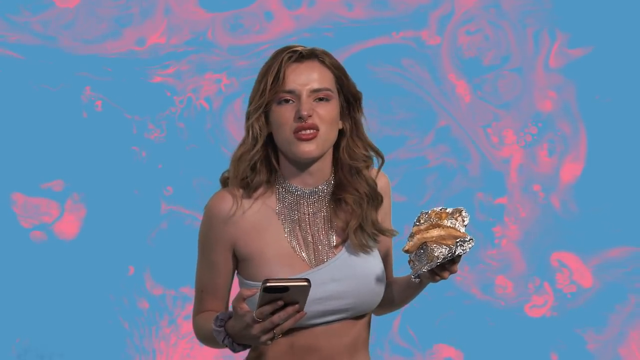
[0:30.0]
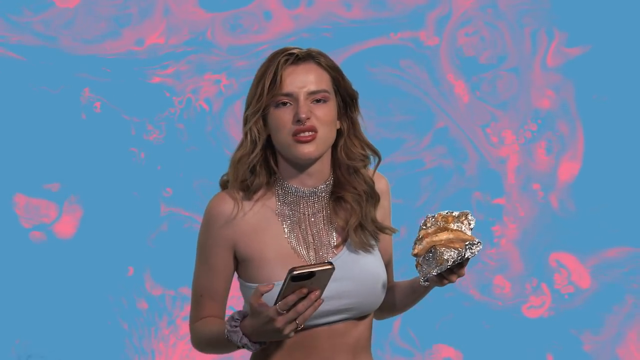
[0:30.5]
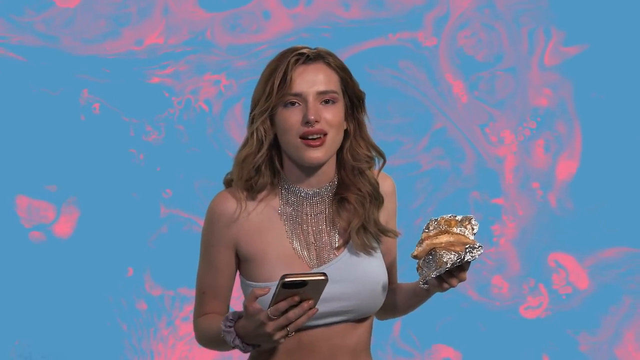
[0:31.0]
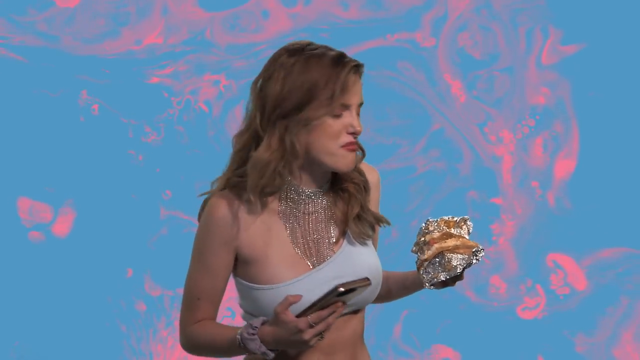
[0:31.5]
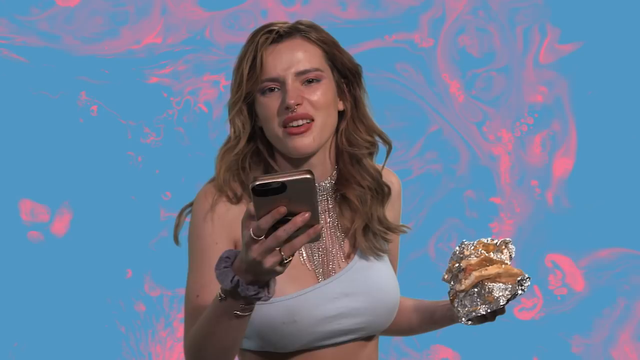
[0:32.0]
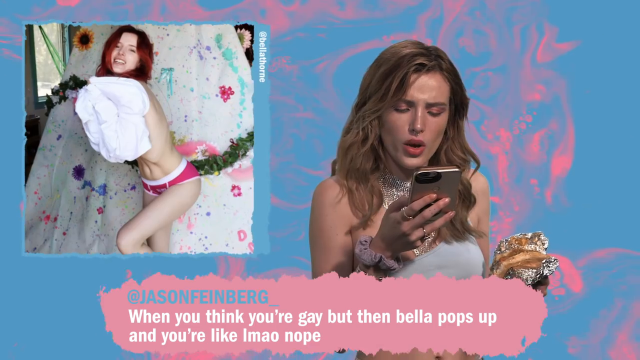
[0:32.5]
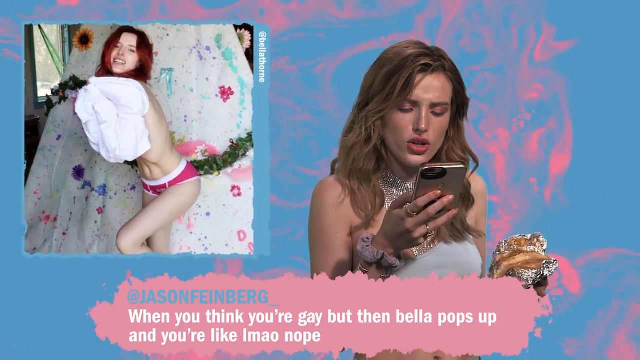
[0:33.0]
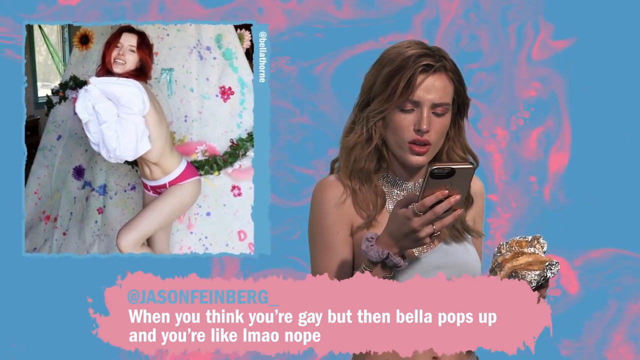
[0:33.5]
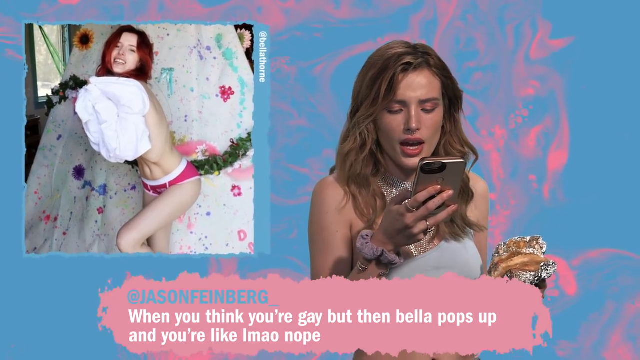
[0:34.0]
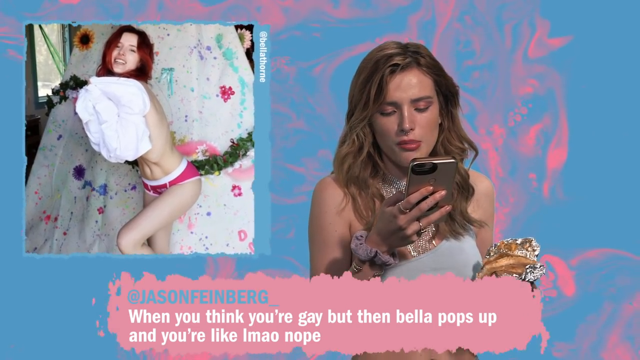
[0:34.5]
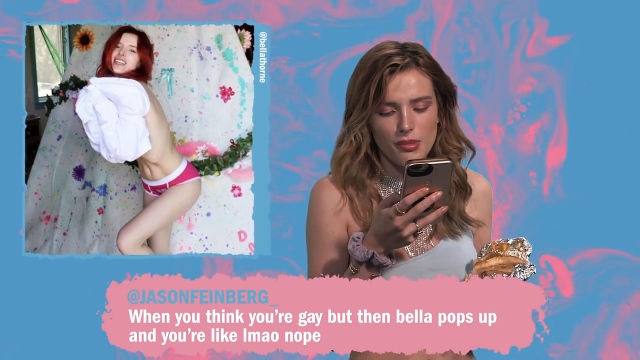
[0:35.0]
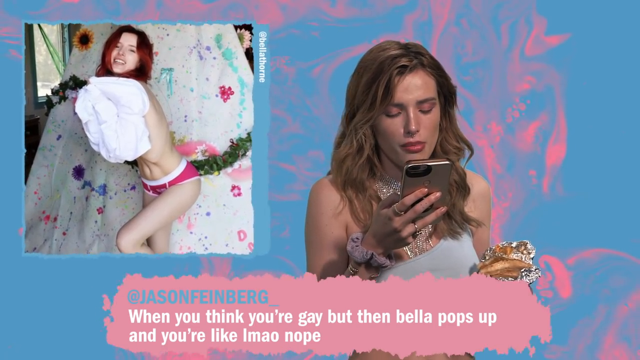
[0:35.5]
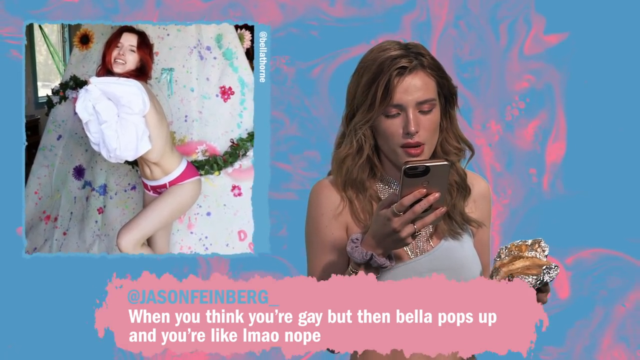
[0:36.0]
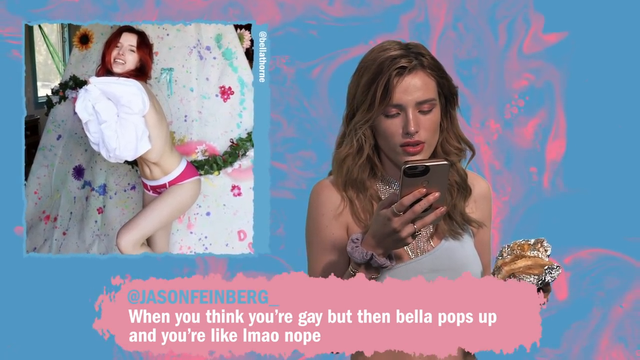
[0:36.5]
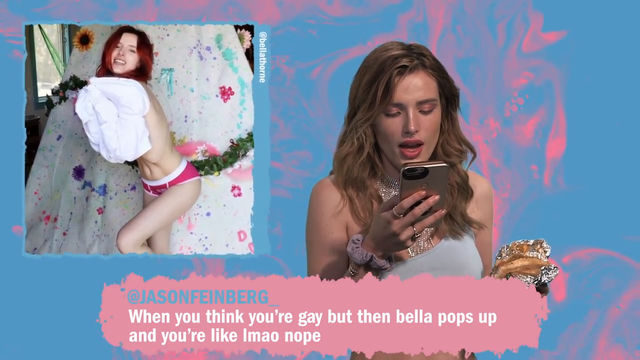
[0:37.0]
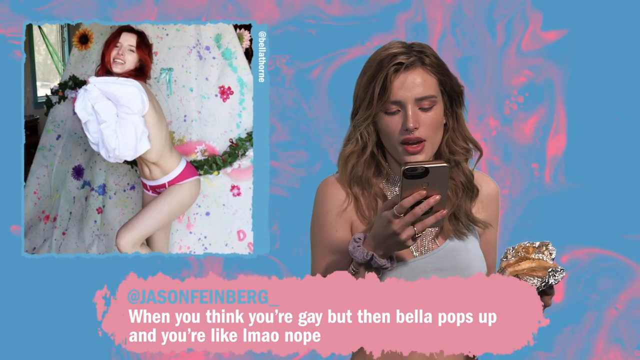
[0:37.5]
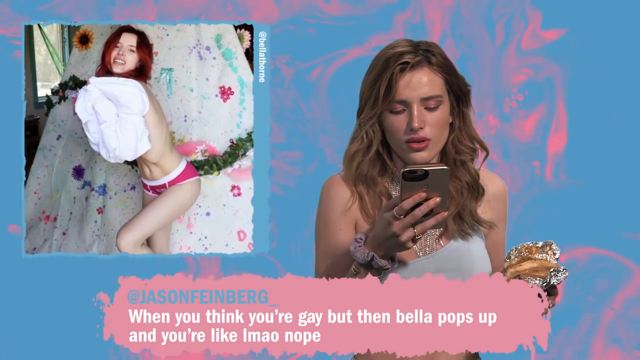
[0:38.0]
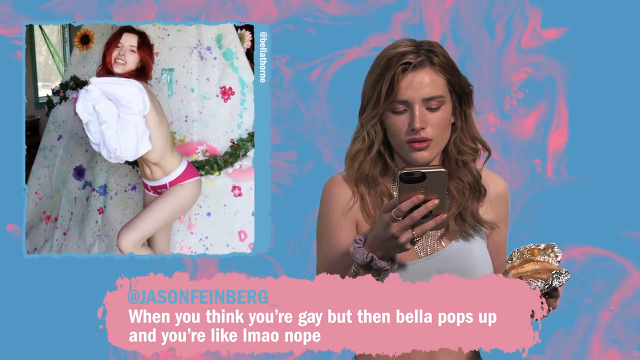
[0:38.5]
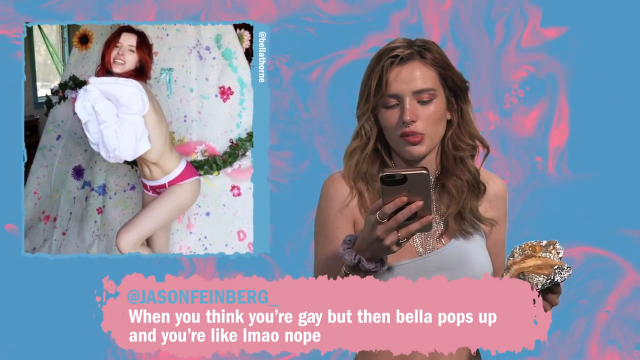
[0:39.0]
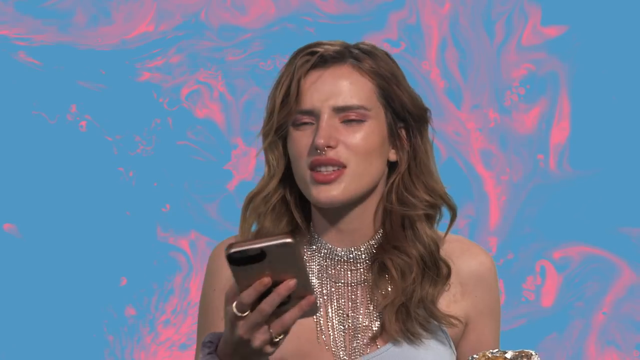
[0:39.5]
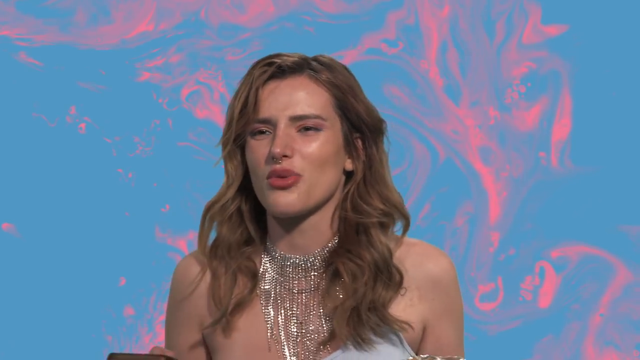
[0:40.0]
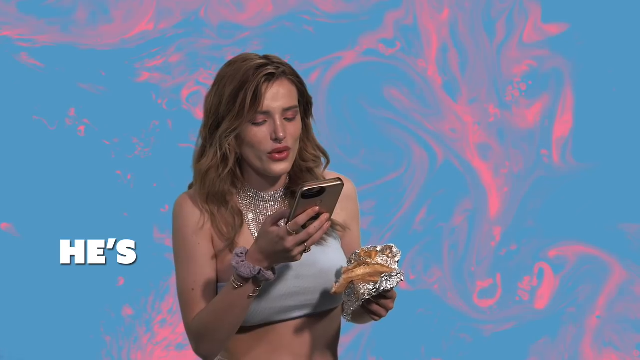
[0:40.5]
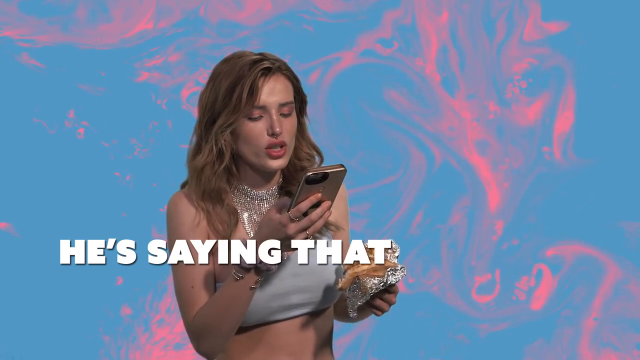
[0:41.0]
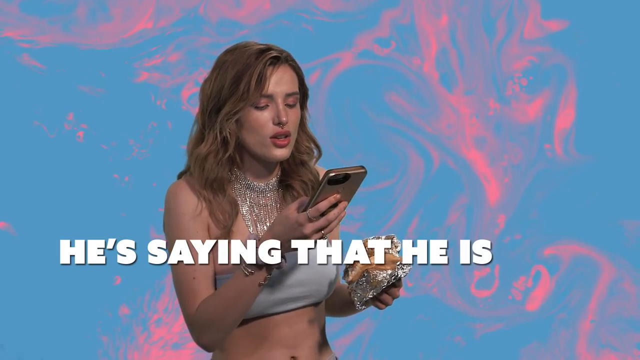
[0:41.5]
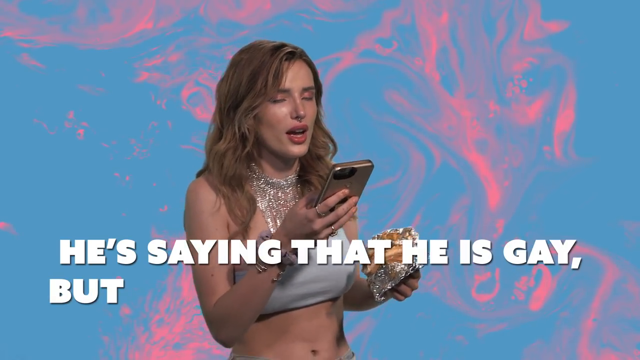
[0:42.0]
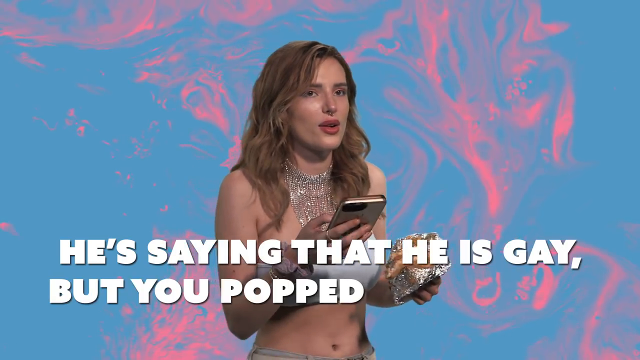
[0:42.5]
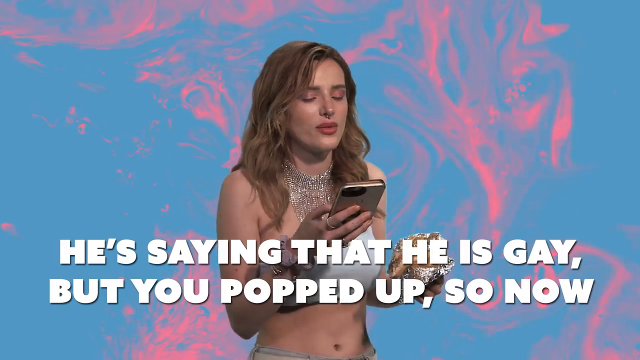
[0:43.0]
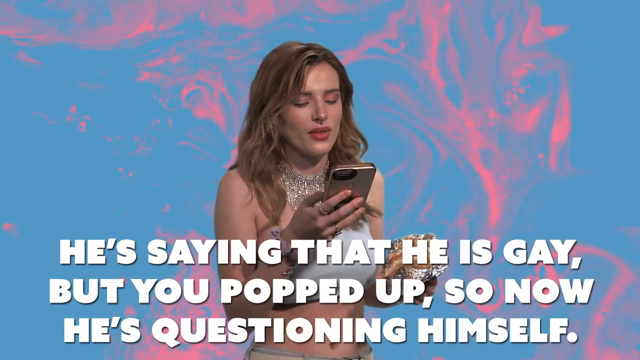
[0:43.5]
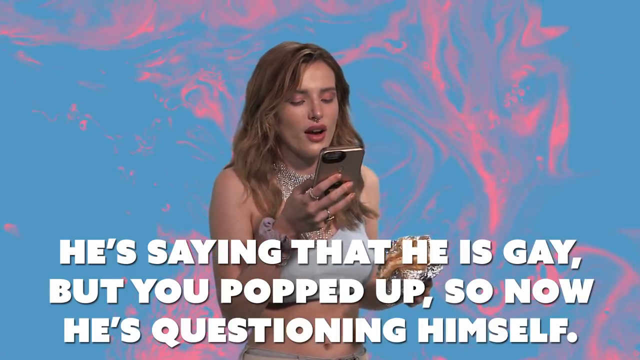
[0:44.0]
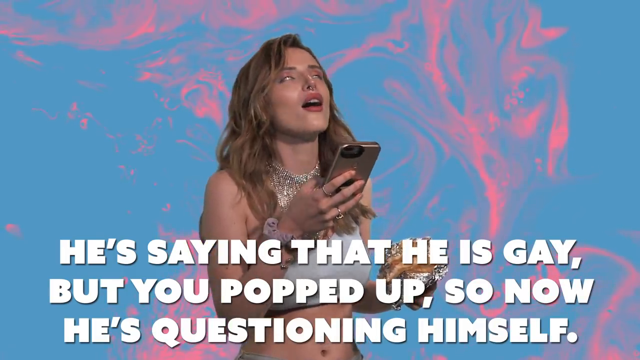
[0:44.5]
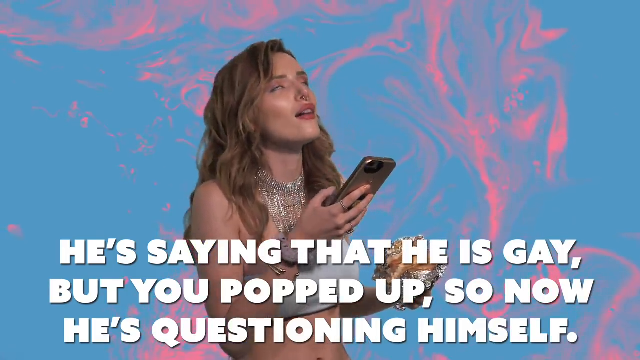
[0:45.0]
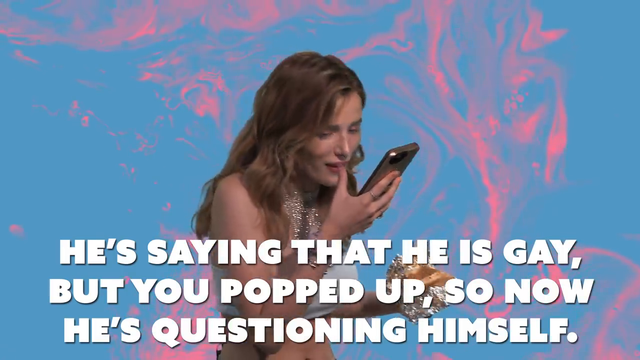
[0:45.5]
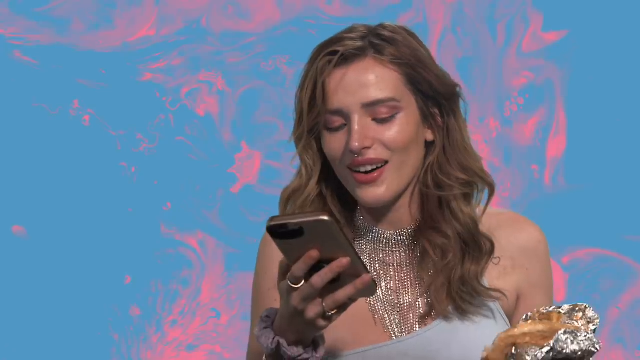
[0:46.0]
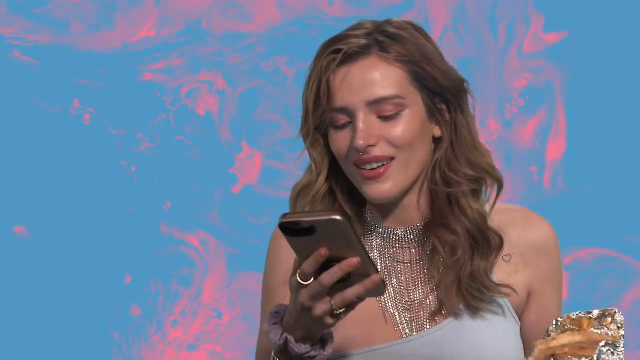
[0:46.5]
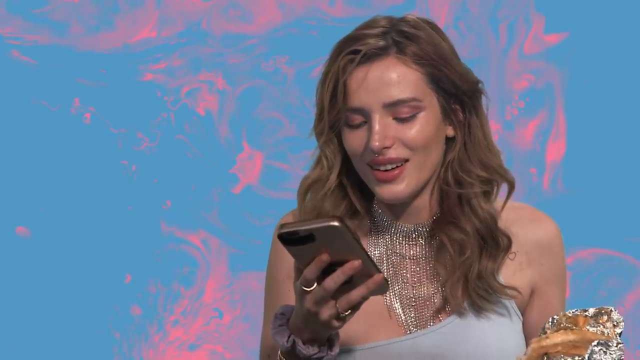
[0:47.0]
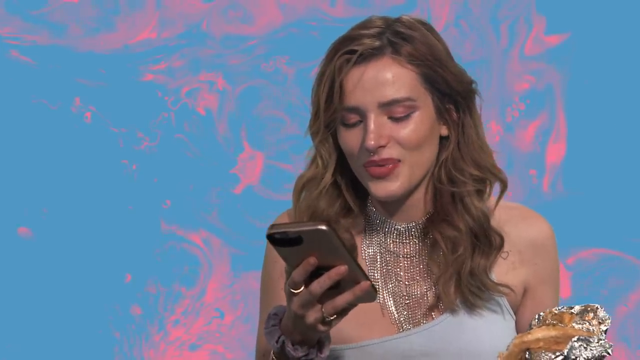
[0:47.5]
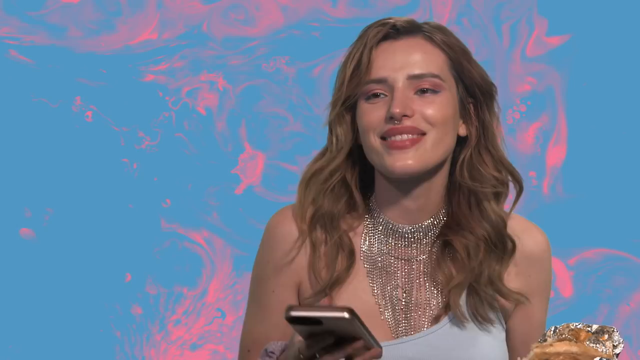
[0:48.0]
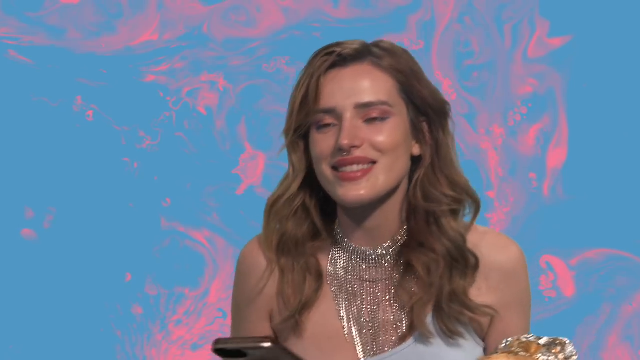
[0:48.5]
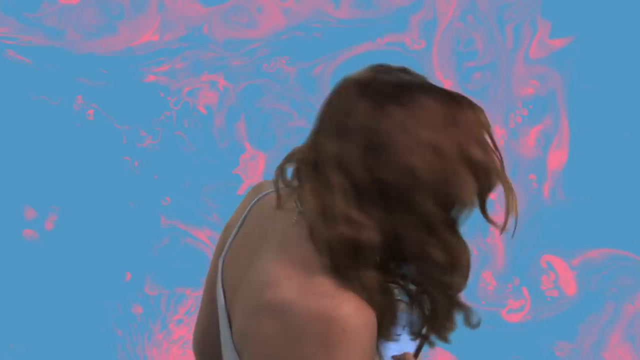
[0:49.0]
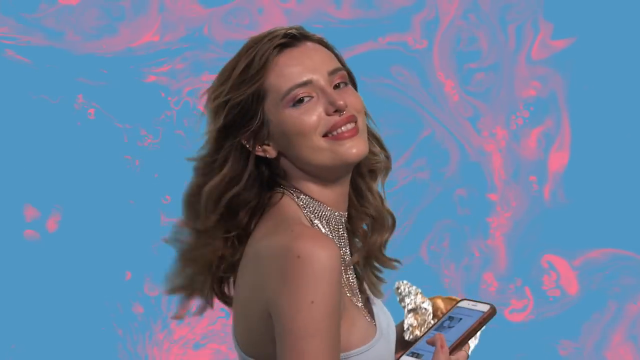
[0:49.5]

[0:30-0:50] Bella Thorne is shown a picture of herself from an underwear photoshoot, with a comment saying that when you think you're gay, but then Bella pops up and you're like, nope. She reads it and at first seems not to understand, then appears a tiny bit flustered, smiles, and reacts lightheartedly, as if saying "oh, stop it, you." The background stays the same; the only change is on her left, where the photograph is shown with a slightly moving, vibrant light blue outline.